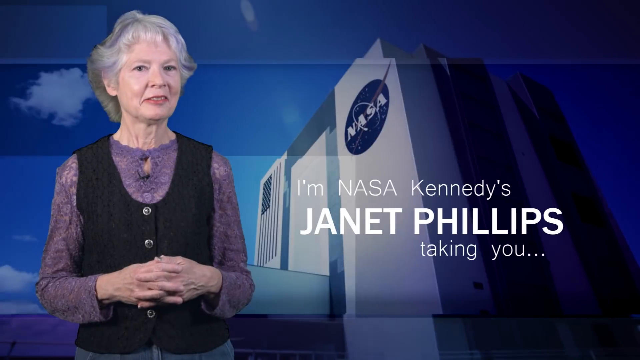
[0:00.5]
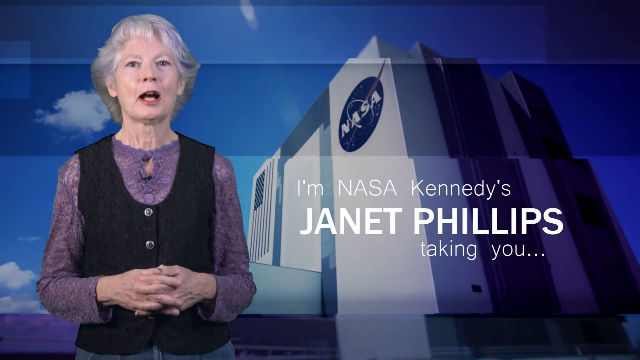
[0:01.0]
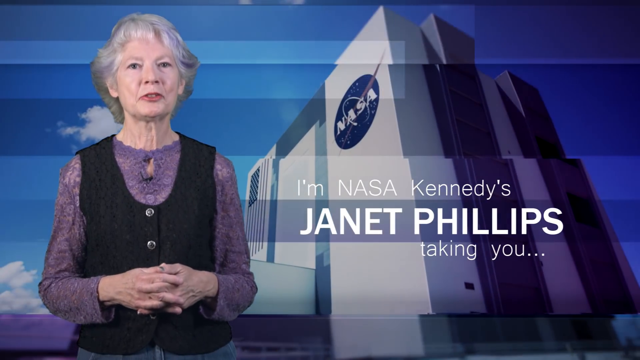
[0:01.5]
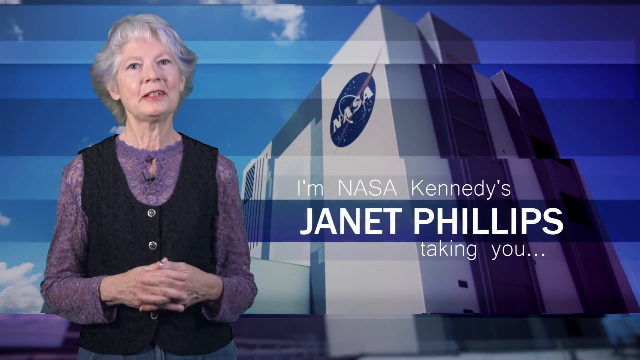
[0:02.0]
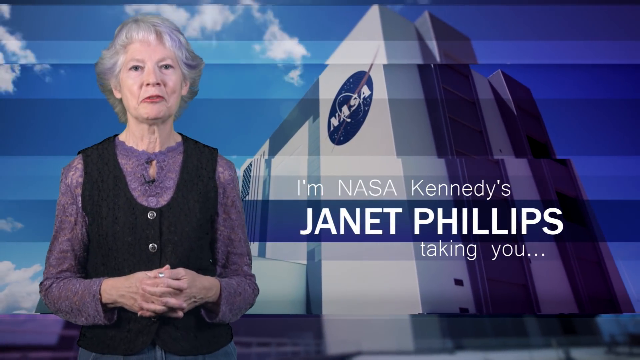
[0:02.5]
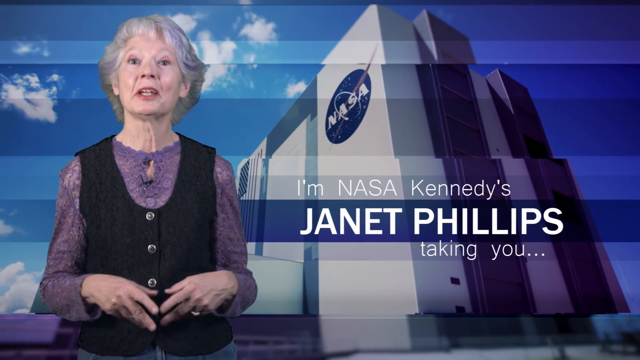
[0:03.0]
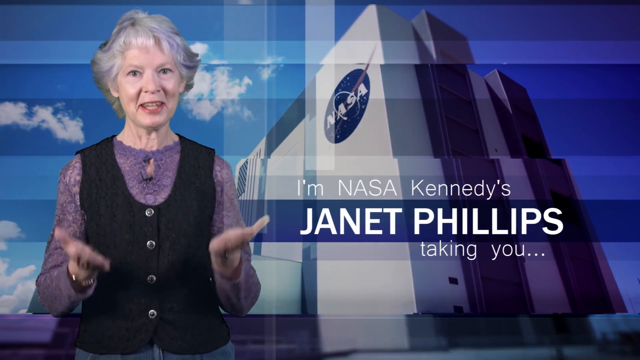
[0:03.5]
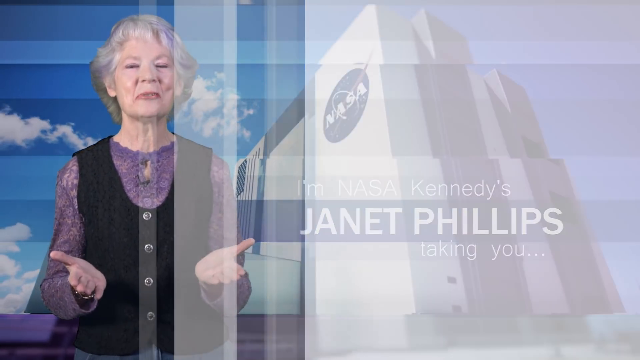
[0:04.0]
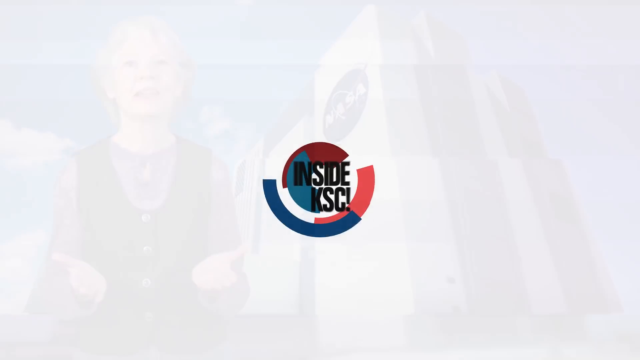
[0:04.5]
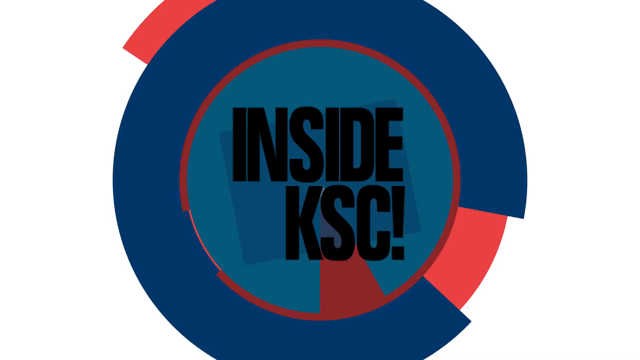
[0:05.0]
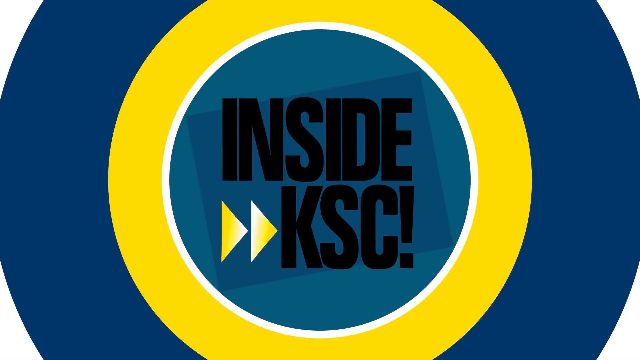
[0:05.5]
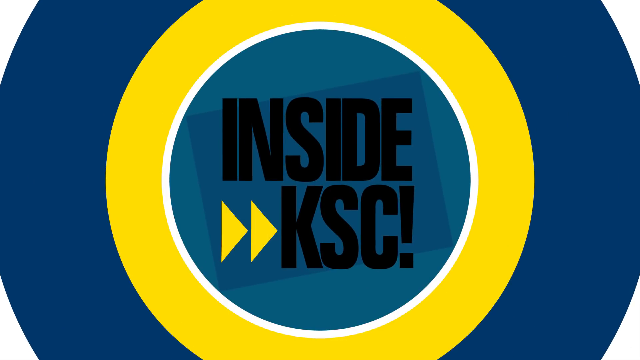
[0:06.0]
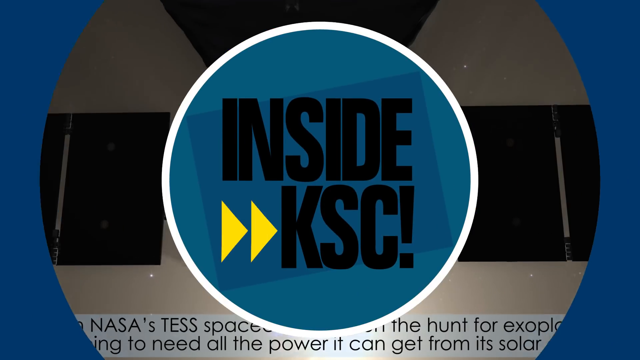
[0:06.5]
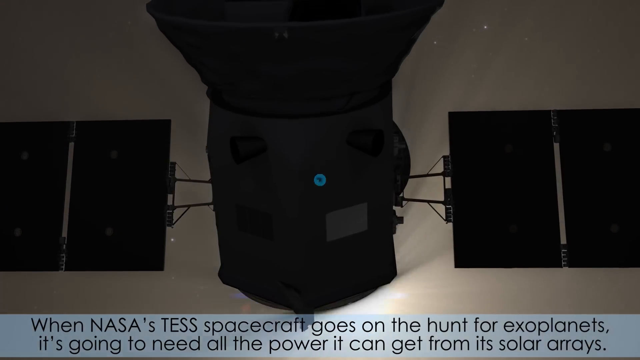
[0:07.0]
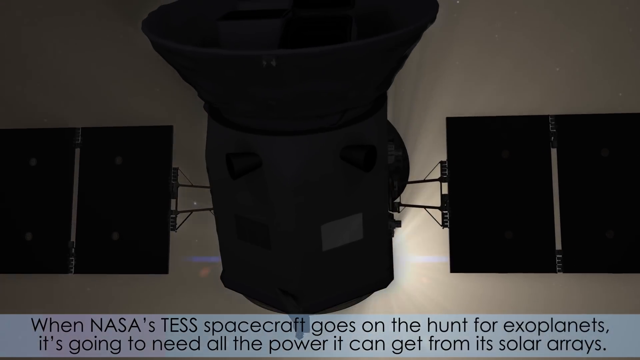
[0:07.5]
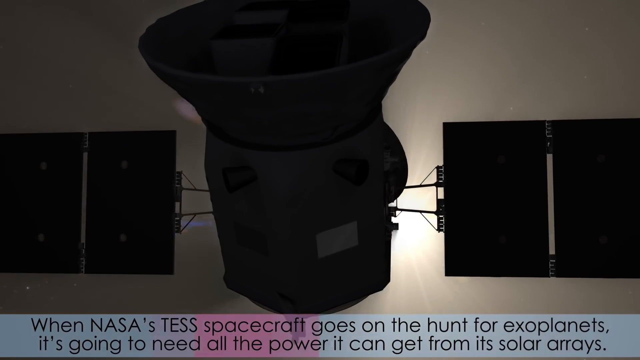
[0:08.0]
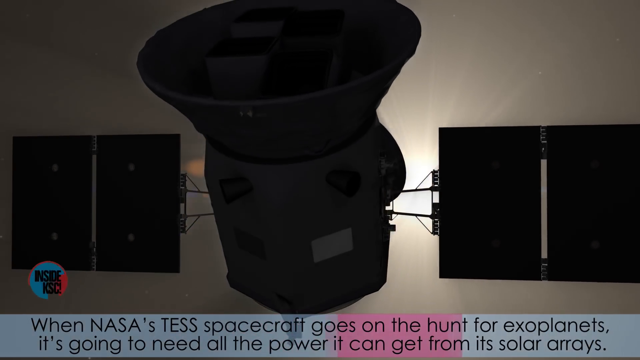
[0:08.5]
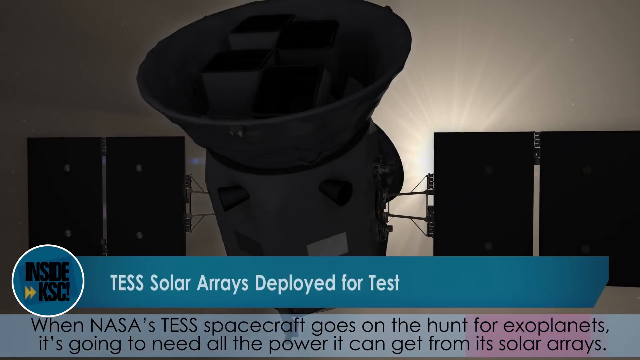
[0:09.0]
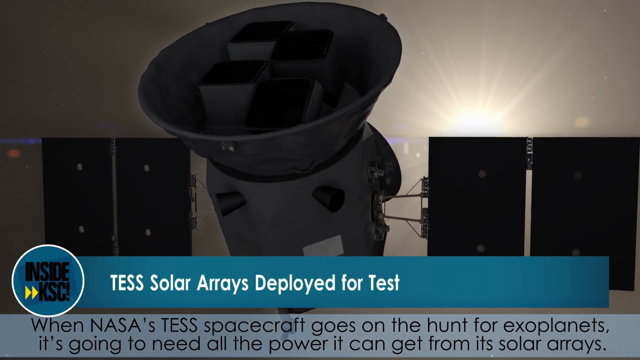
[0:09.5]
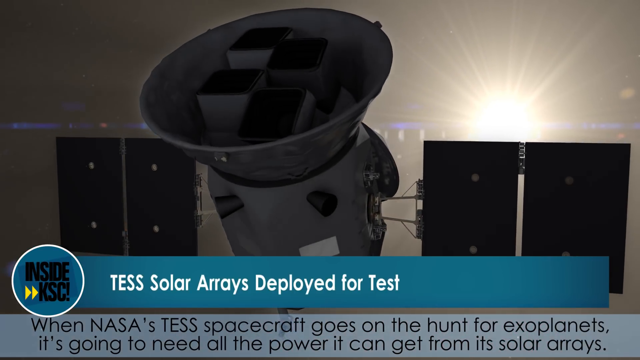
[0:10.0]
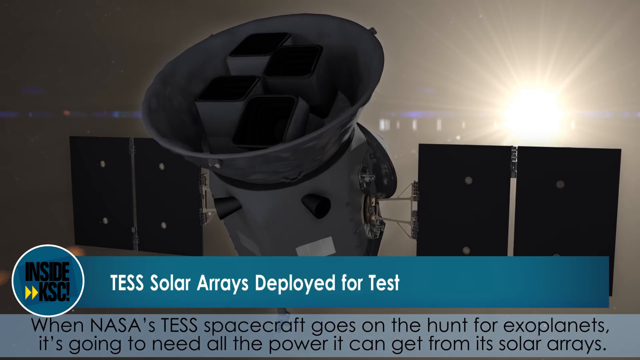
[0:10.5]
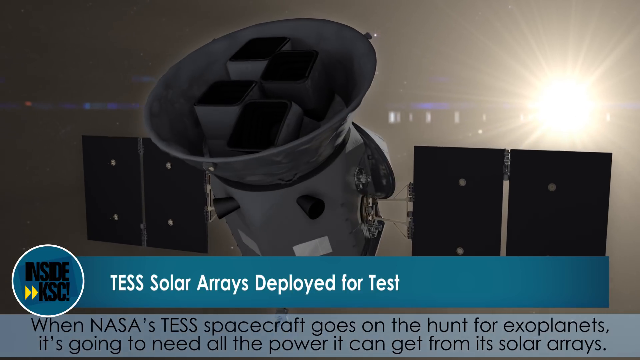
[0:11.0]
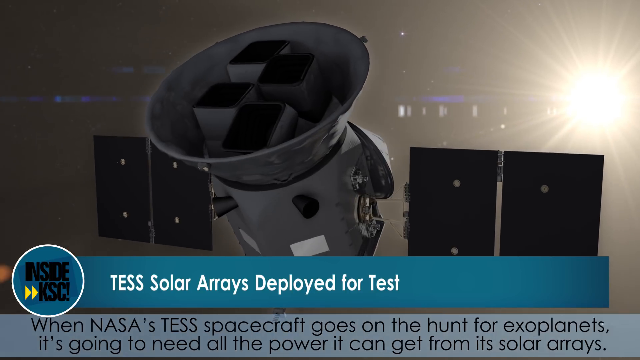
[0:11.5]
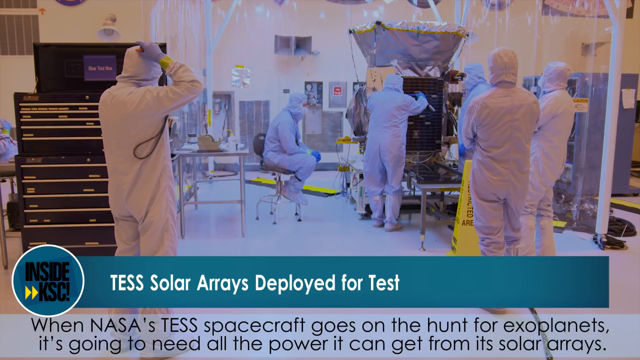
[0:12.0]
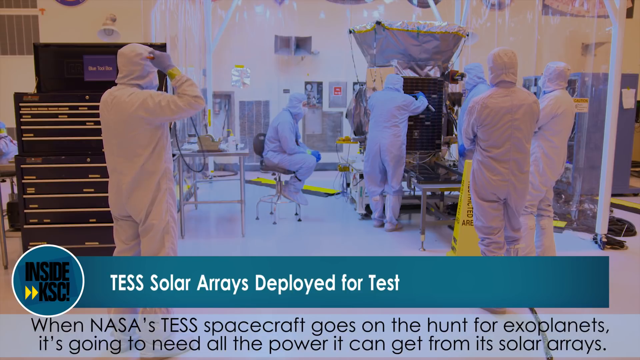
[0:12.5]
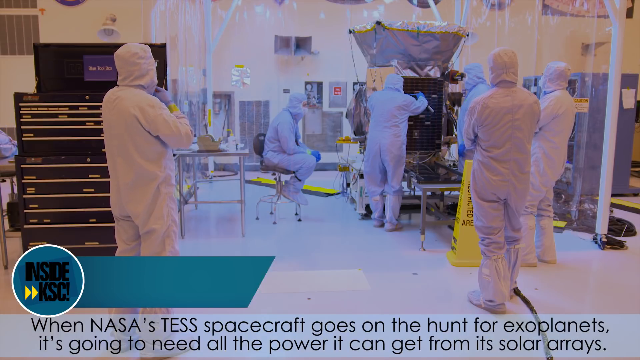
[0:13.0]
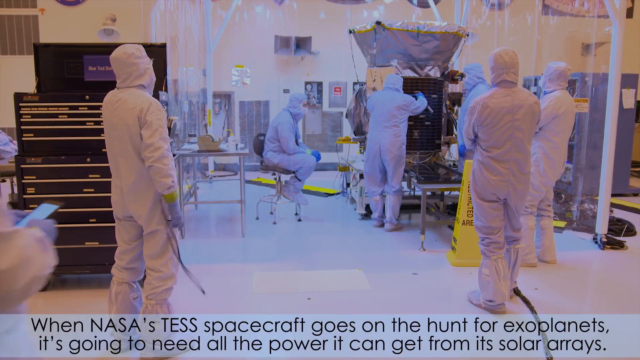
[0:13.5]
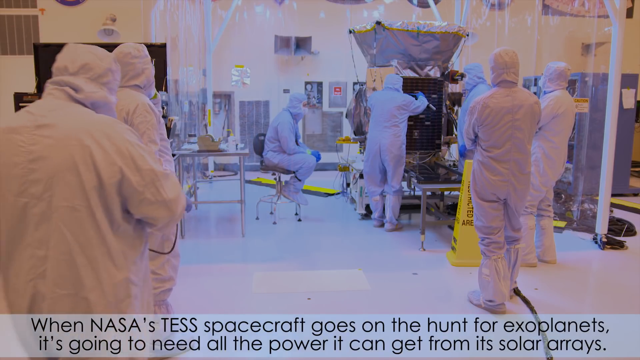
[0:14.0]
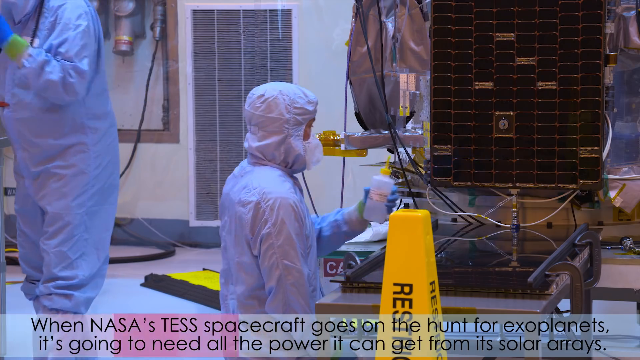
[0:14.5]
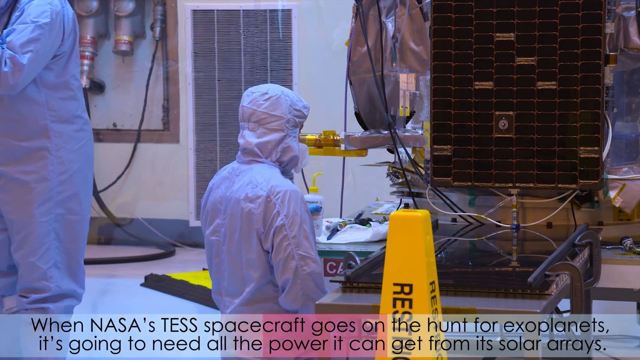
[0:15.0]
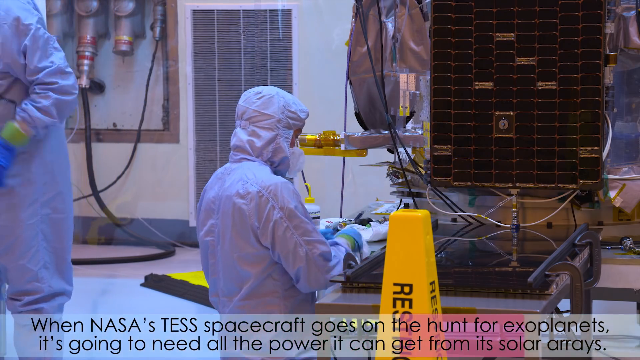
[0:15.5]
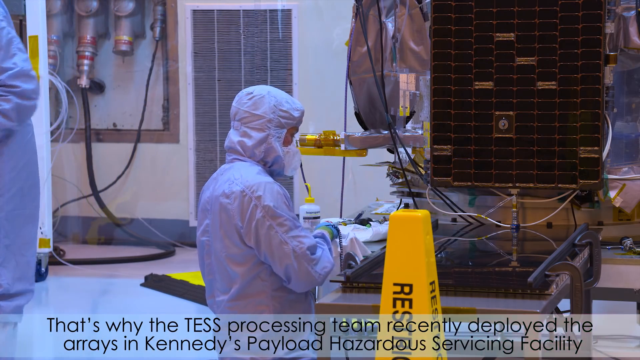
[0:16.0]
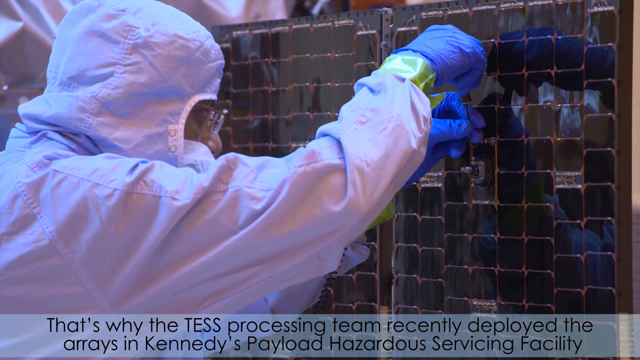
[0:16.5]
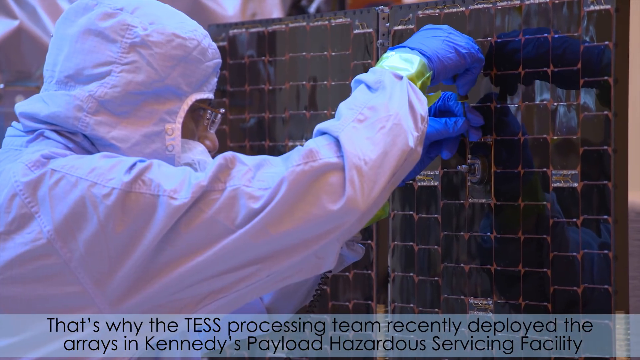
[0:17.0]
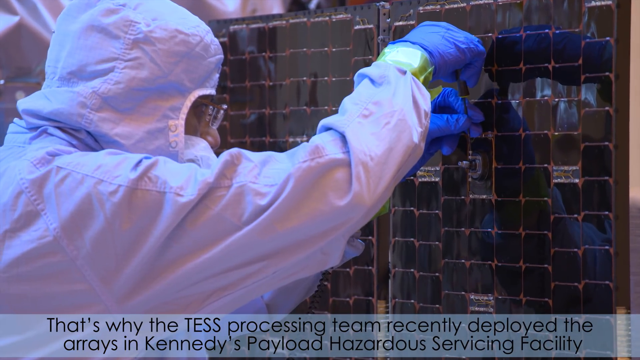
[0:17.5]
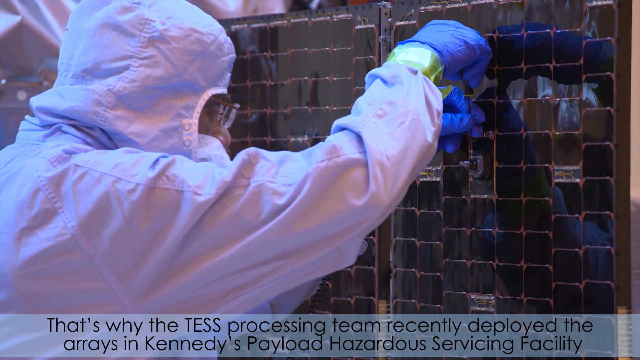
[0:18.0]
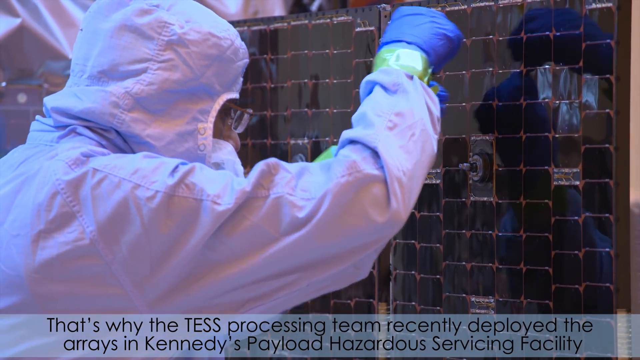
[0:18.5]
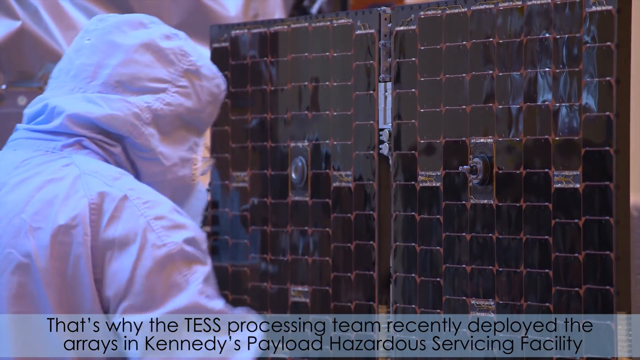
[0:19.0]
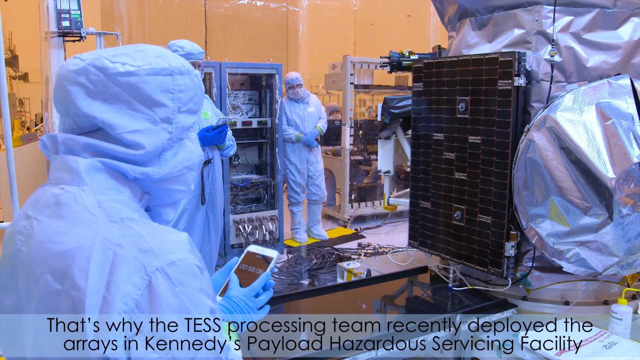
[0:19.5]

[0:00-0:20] A woman is on the left with some text to the right, and behind her to the right is a gray building with the NASA logo on it. The video cuts to a screen with a logo inside a circular pattern: the outer circle is blue, the middle circle is yellow, and then there is a white circle and a lighter blue circle, with black text inside reading "inside KSC!" Next comes some sort of satellite, shown as a digital recreation rather than actual footage, with a blue rectangular text box at the bottom containing white text that reads "test solar arrays deployed for tests." Another cut shows a group of scientists or researchers in white outfits that almost look like doctors' scrubs.